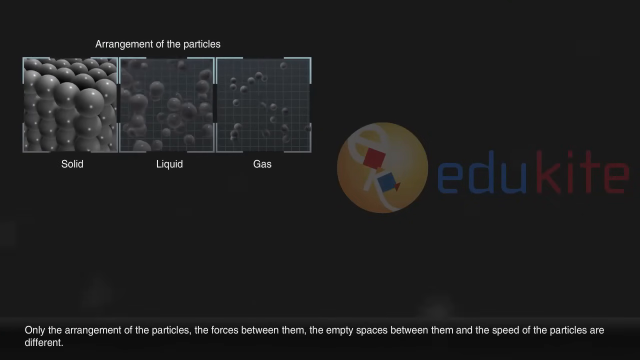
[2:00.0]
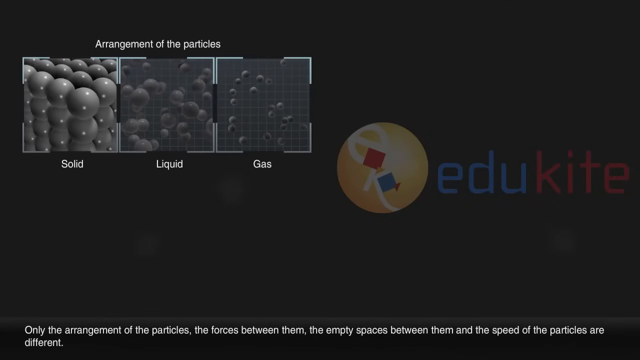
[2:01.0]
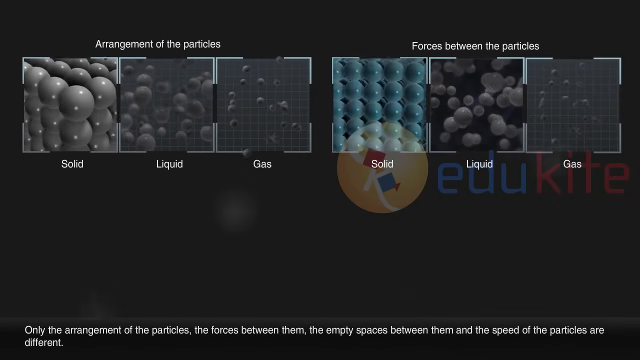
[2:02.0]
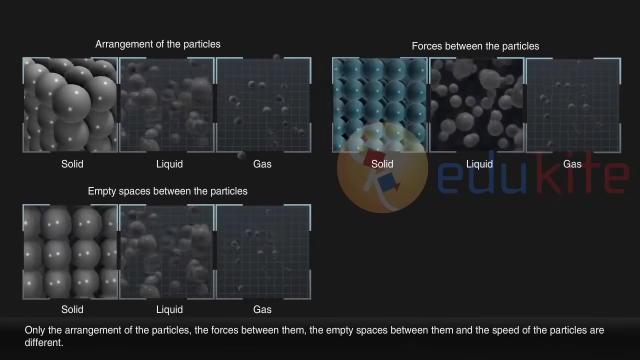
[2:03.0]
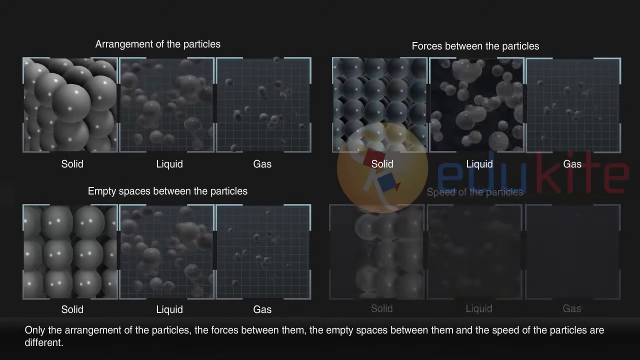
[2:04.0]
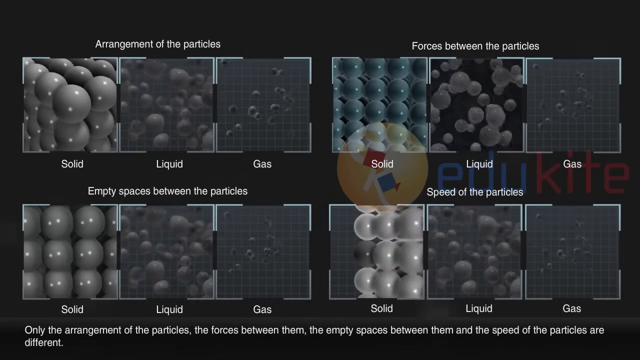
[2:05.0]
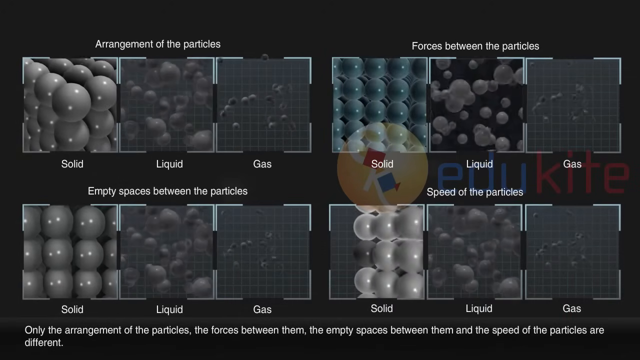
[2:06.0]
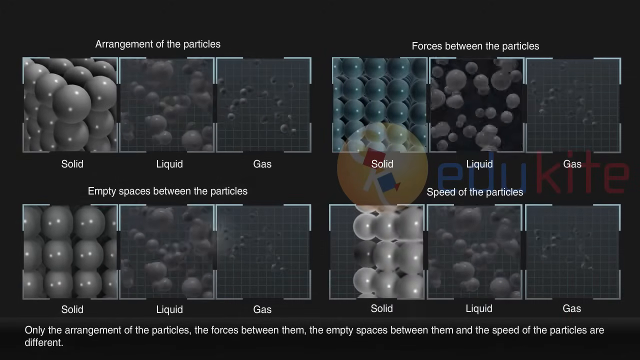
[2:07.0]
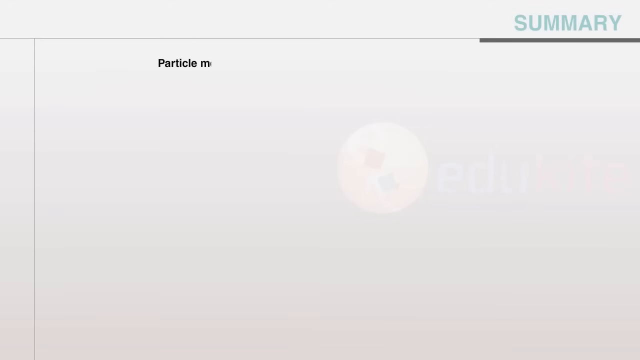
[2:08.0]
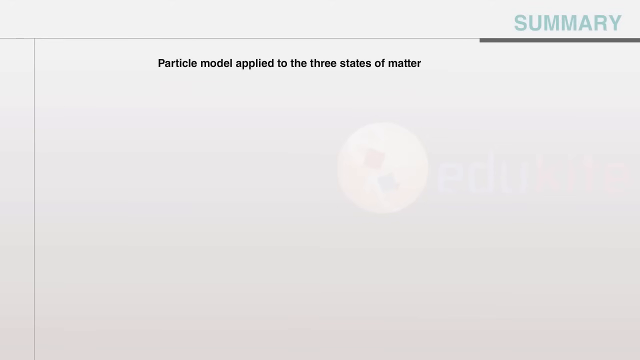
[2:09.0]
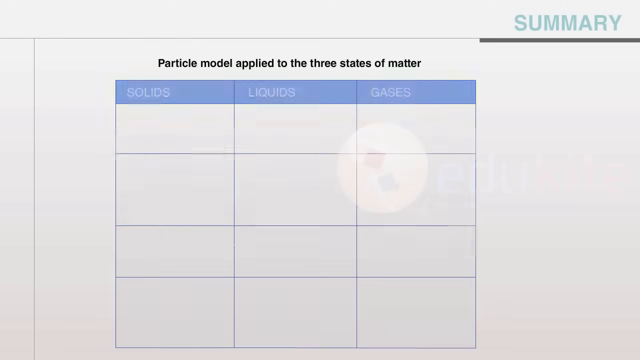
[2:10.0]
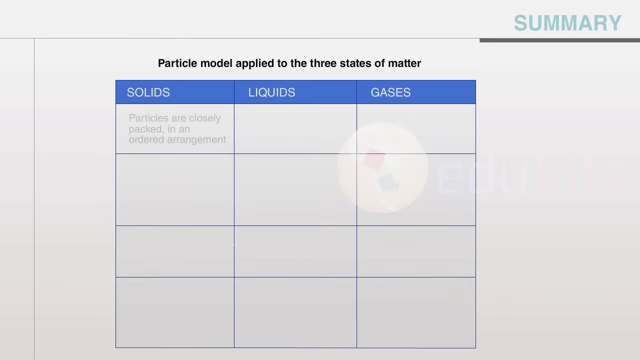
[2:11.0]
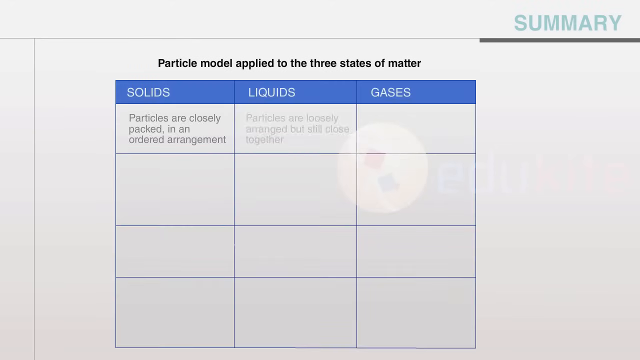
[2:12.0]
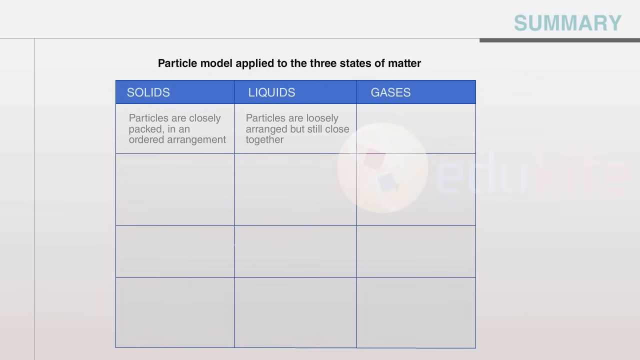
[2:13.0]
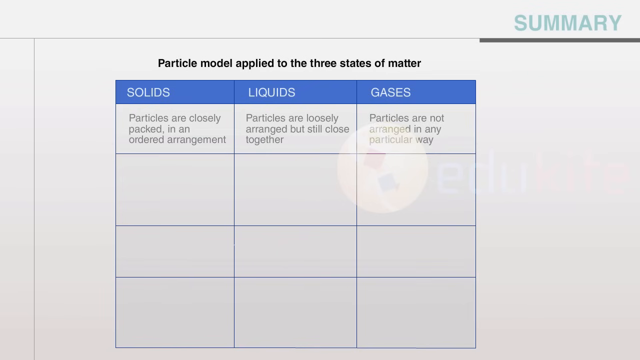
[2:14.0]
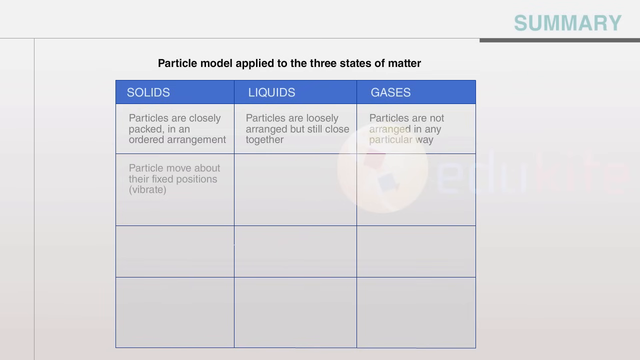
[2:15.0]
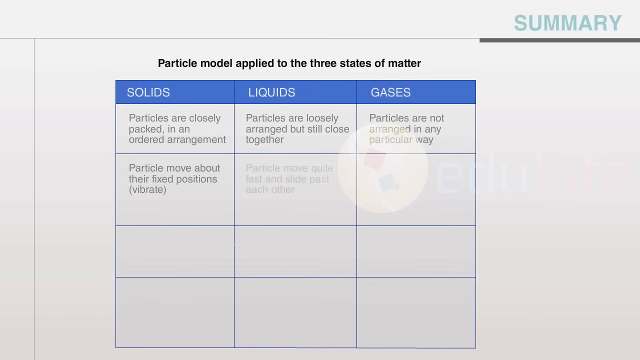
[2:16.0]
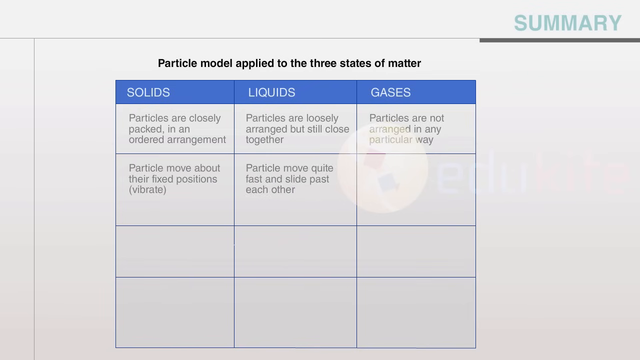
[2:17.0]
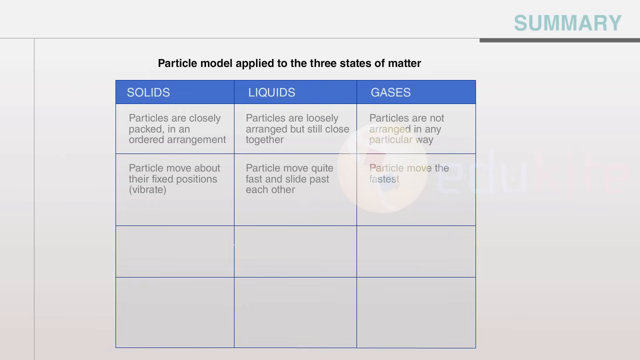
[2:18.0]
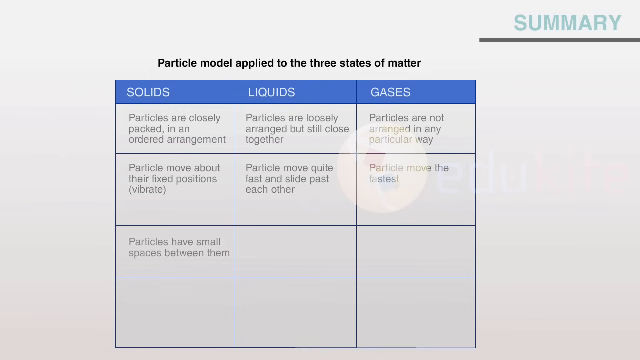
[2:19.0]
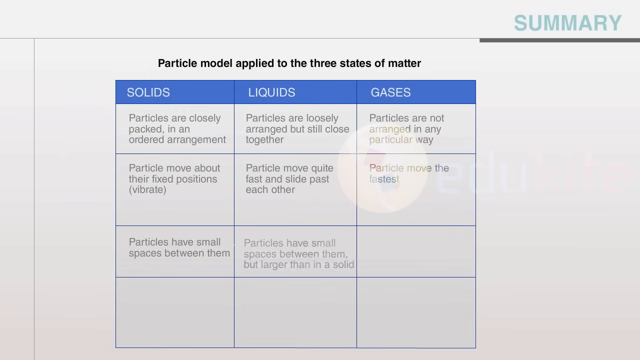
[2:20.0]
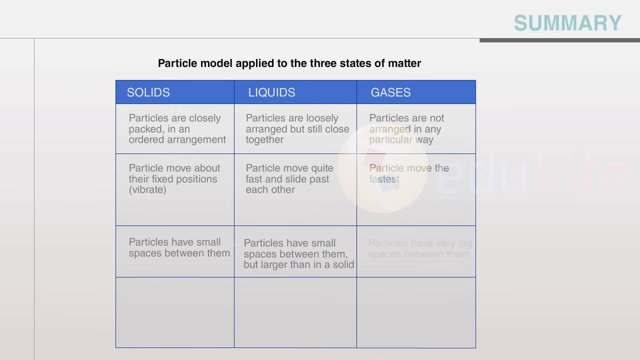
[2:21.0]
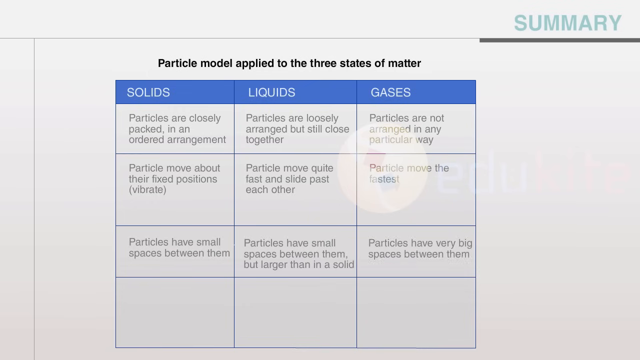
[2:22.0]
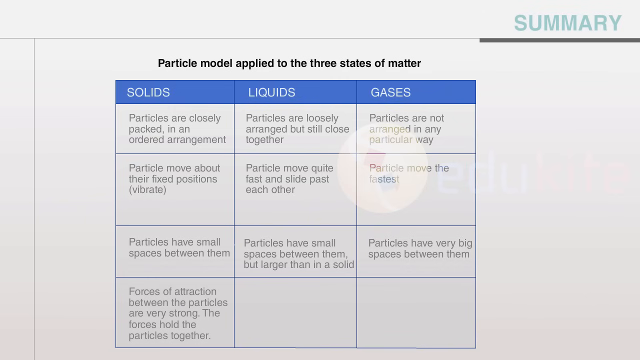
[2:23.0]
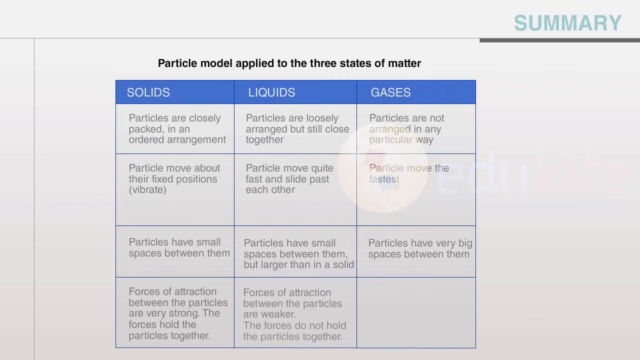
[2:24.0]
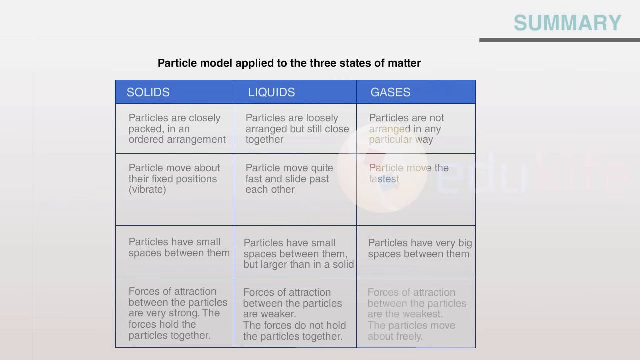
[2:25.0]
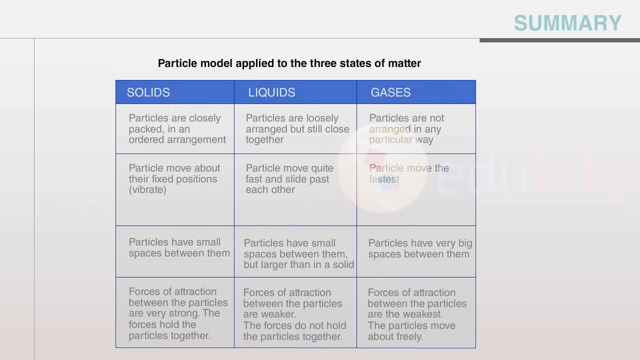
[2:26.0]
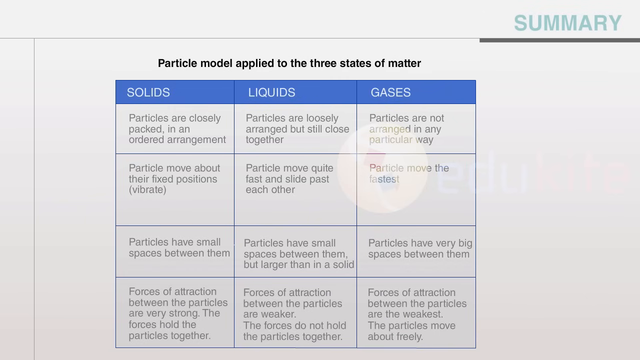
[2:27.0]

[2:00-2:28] Three squares appear to be at the top left, with white text above them reading "arrangement of the particles" and white text beneath them, from left to right, reading "solid," "liquid" and "gas." The solid has many spheres packed together, the liquid has spheres a little spread out, and the gas has gray spheres very spread out. White text at the bottom reads "only the arrangement of the particles, the forces between them, and the empty spaces between them, and the speed of the particles are different." At the top right there appears to be a similar set of three squares labeled "forces between the particles," with the spheres of the solid glowing blue, while the liquid and gas are the same. At the bottom left a similar set appears to be labeled "empty spaces between the particles," and at the bottom right the three squares appear again labeled "speed of the particles." All show similar pictures: the solid, what looks like a lattice of spheres vibrating in place next to each other; the liquid, spheres more spread apart and floating around; and the gas, spheres floating very freely with a lot of open space. The video then transitions to a white screen with "summary" at the top right and black text in the middle reading "particle model applied to the three states of matter." A table appears with three columns, "solids," "liquids" and "gases," and four rows, and the cells slowly fill in from the top left to the bottom right. The first row reads "particles are closely packed in an ordered arrangement" for solids, "particles are loosely arranged but still close together" for liquids, and "particles are not arranged in any particular way" for gases. The second row reads "particles move about their fixed positions vibrate" for solids, "particles move quite fast and slide past each other" for liquids, and "particles move the fastest" for gases. The third row reads "particles have small spaces between them" for solids, "particles have small spaces between them but larger than in solid" for liquids, and "particles have very big spaces between them" for gases. The fourth row reads "forces of attraction between the particles are very strong the forces hold the particles together" for solids, "forces of attraction between the particles are weaker the forces did not hold the particles together" for liquids, and "forces of attraction between the particles are the weakest the particles move about freely" for gases.